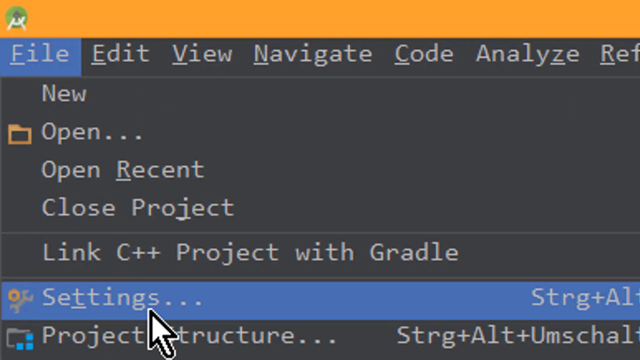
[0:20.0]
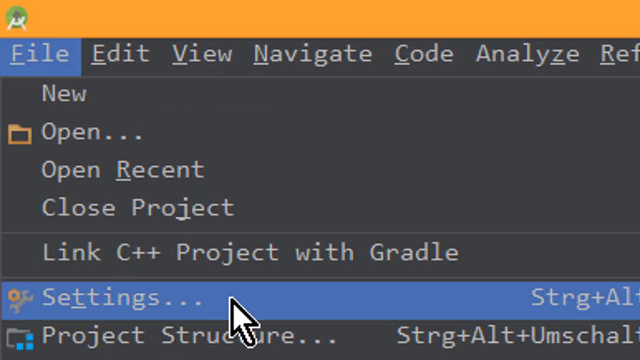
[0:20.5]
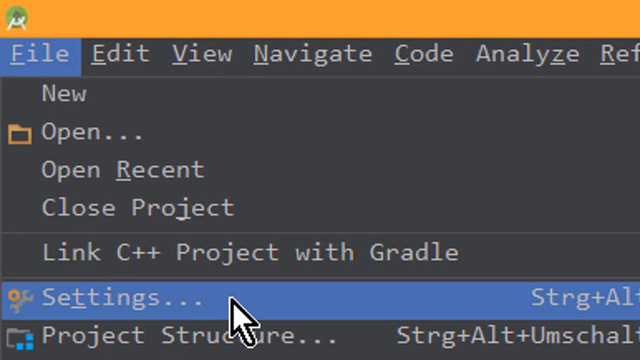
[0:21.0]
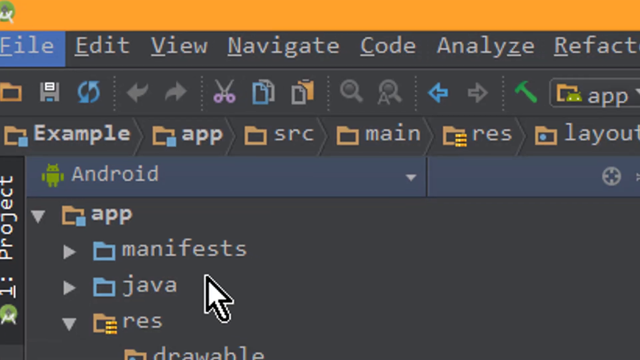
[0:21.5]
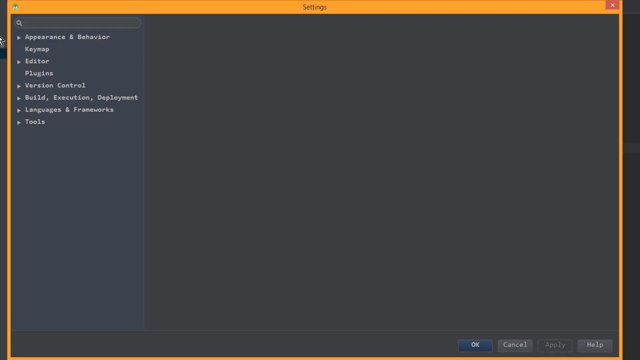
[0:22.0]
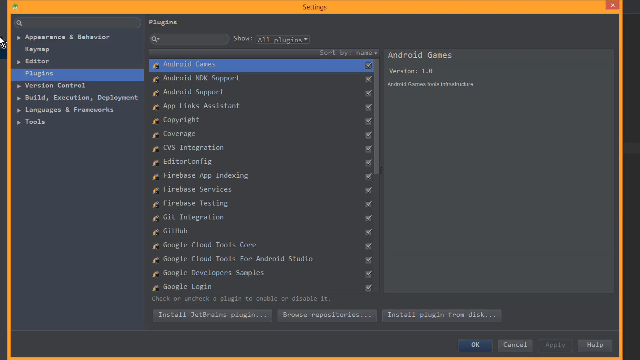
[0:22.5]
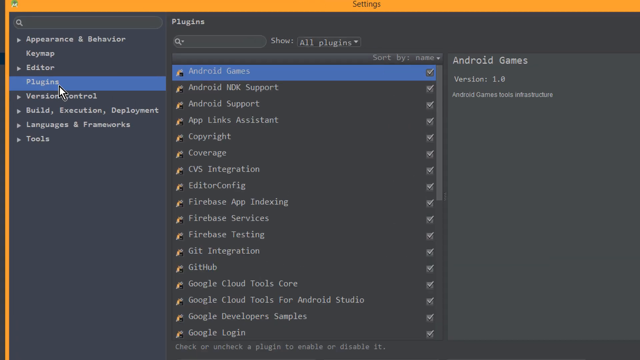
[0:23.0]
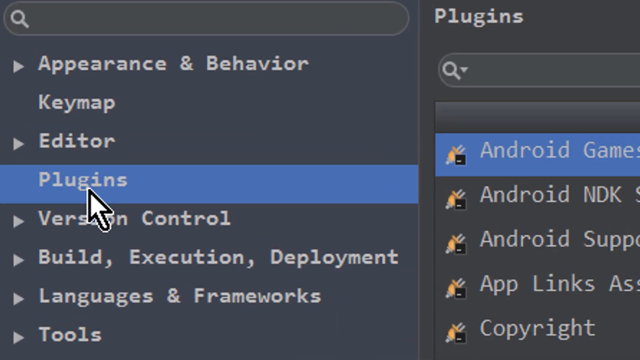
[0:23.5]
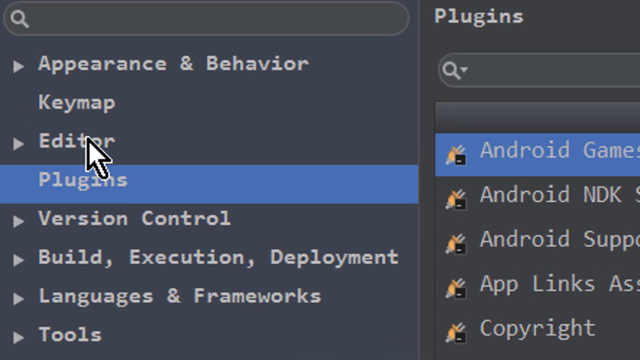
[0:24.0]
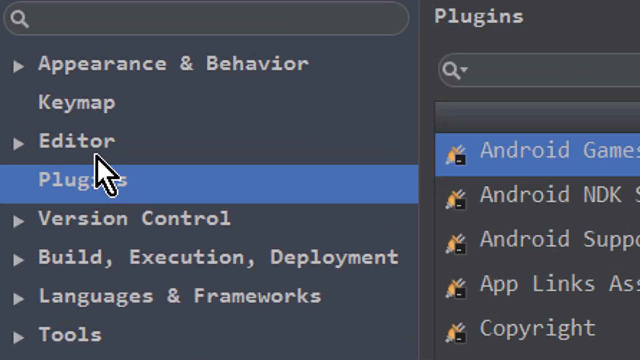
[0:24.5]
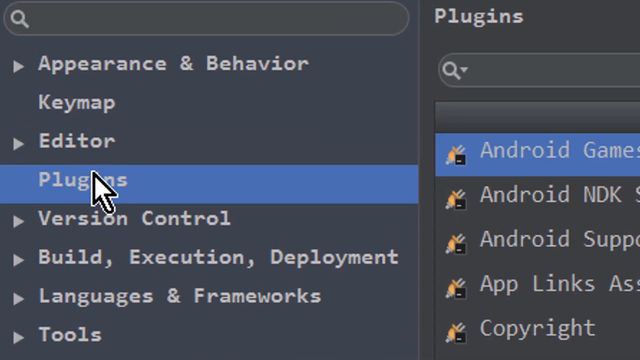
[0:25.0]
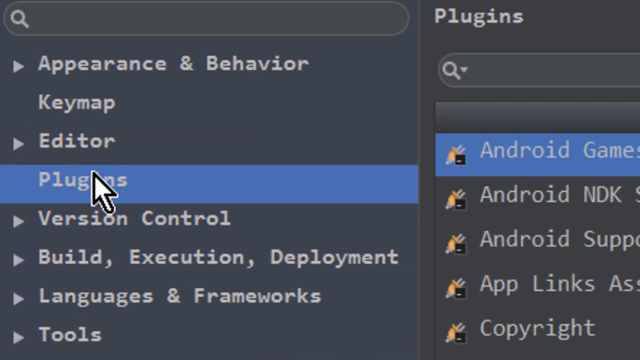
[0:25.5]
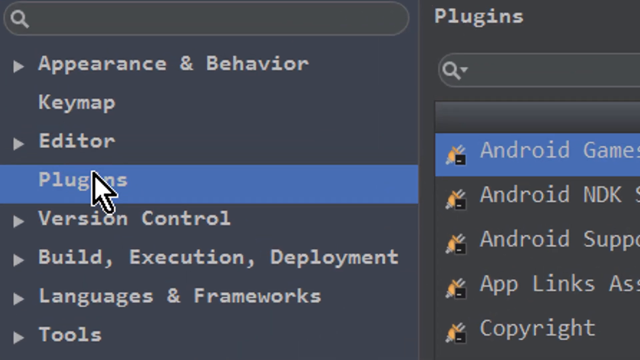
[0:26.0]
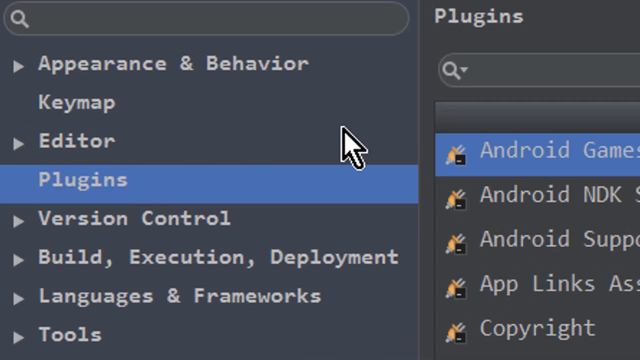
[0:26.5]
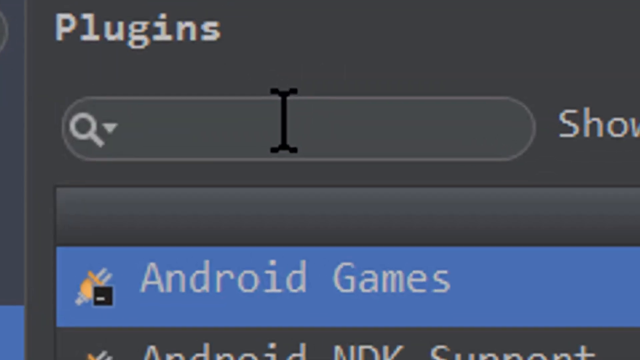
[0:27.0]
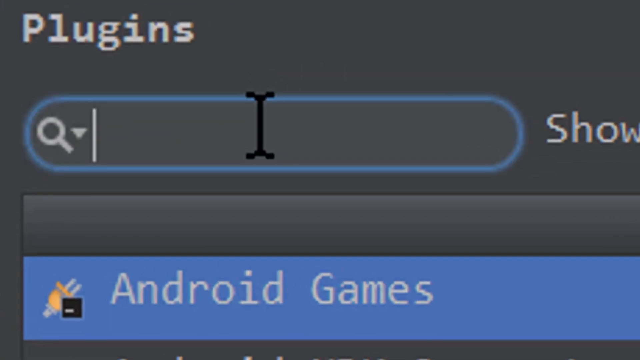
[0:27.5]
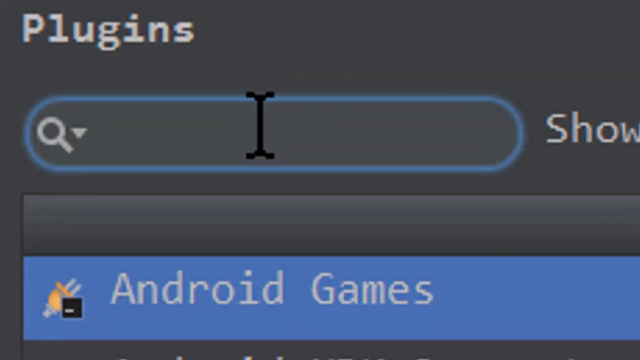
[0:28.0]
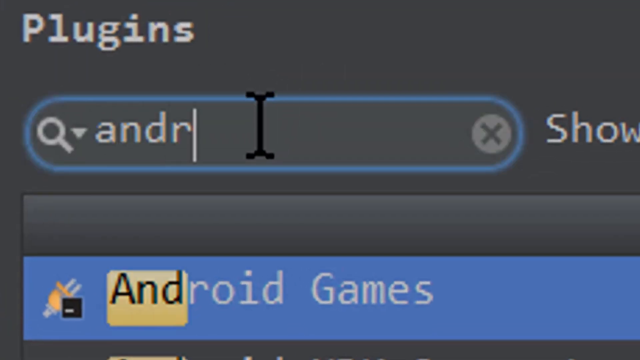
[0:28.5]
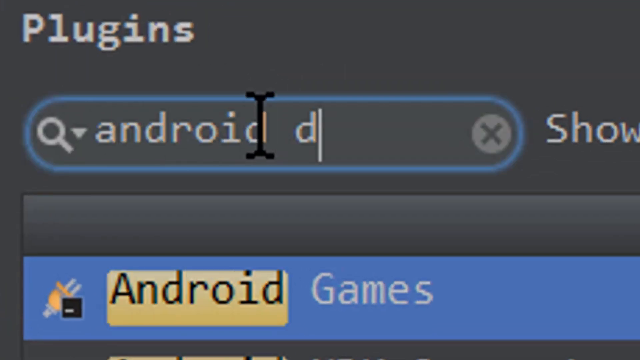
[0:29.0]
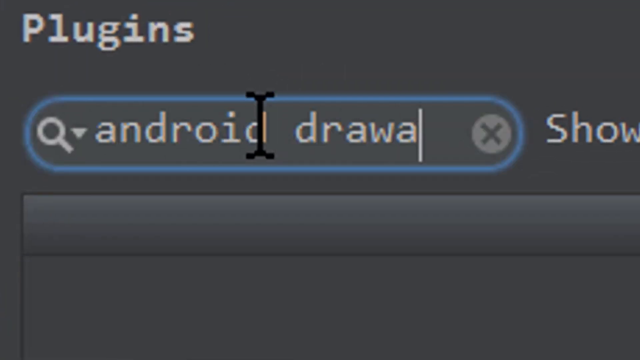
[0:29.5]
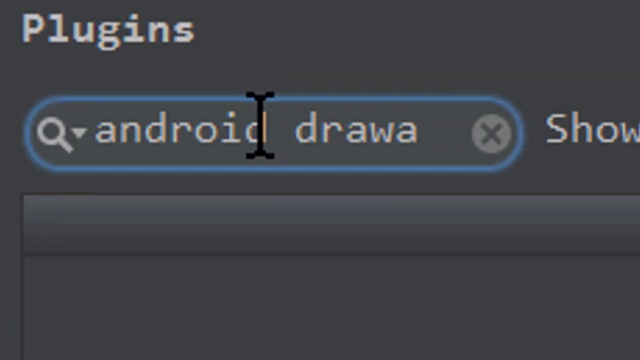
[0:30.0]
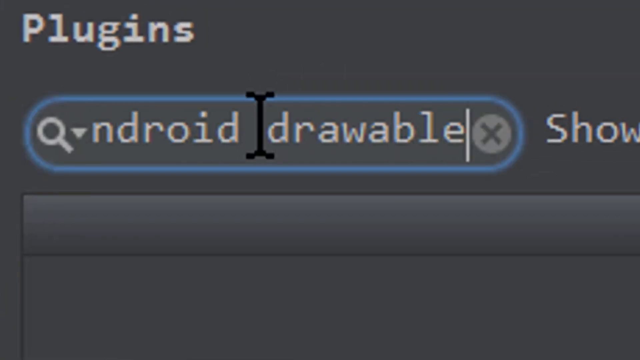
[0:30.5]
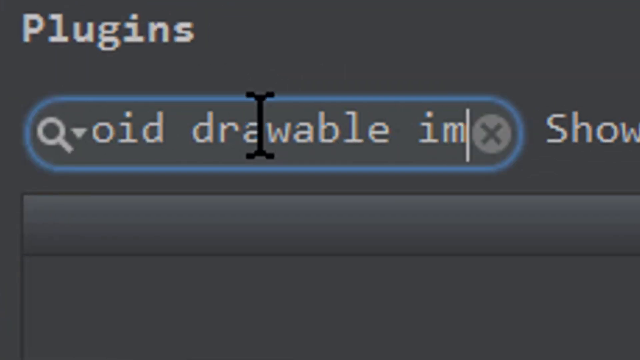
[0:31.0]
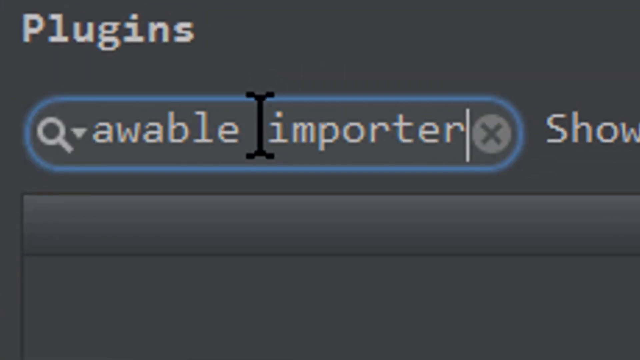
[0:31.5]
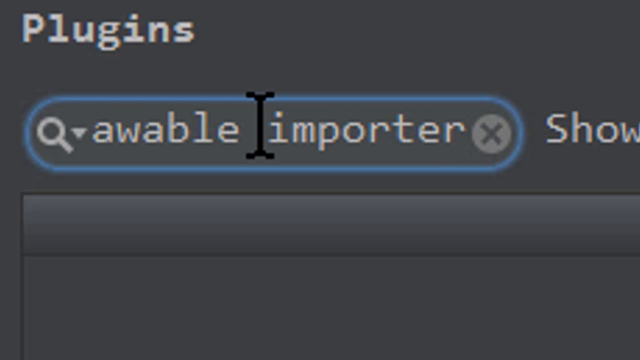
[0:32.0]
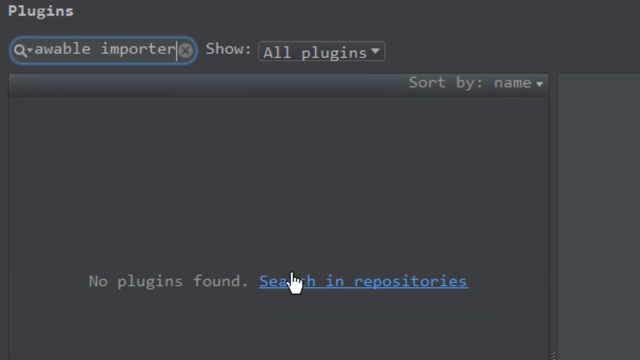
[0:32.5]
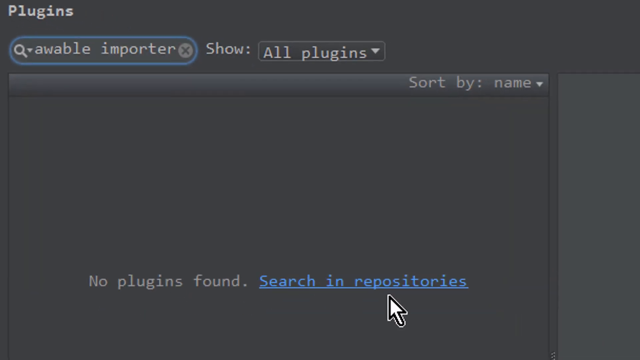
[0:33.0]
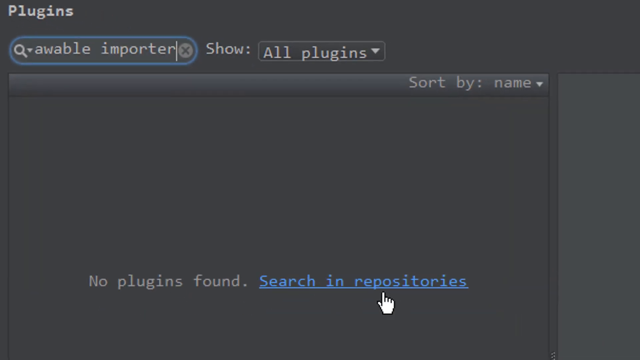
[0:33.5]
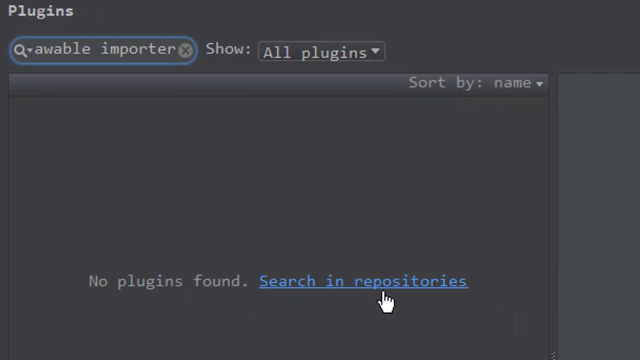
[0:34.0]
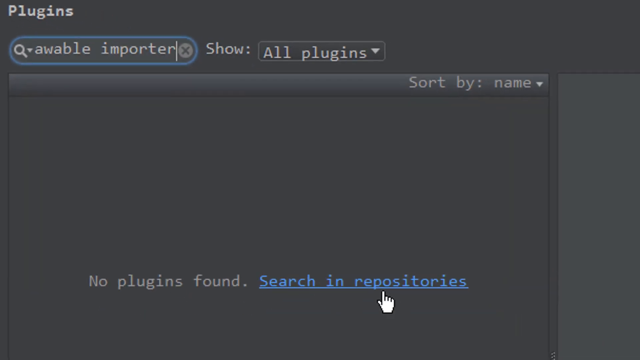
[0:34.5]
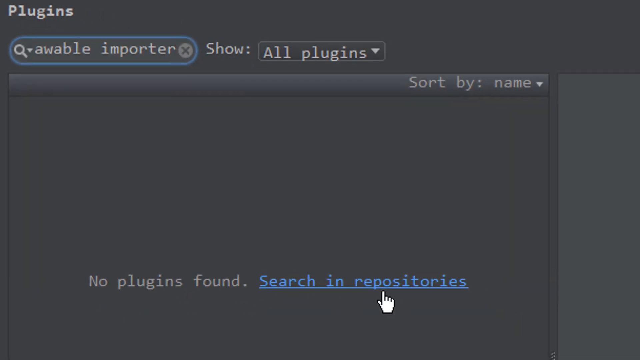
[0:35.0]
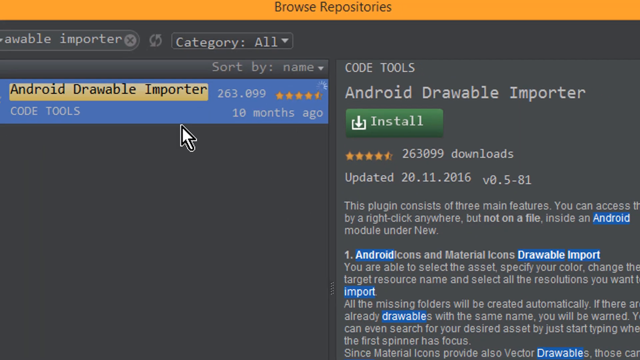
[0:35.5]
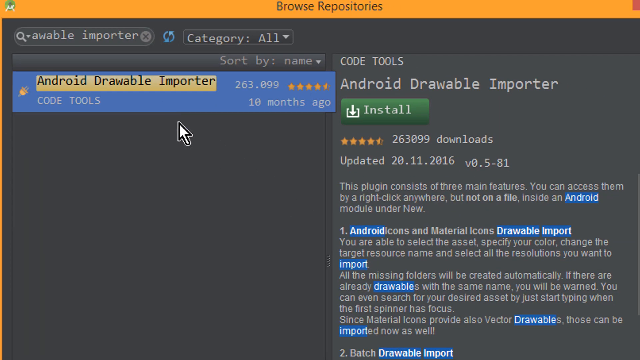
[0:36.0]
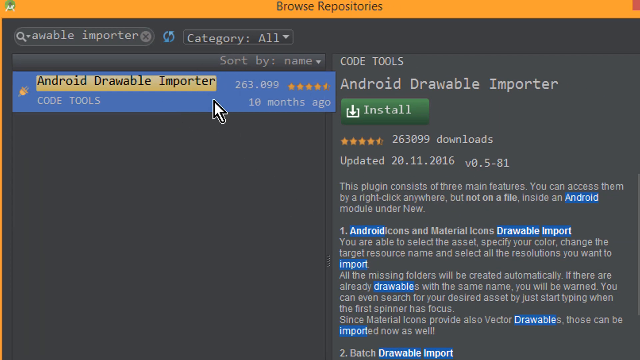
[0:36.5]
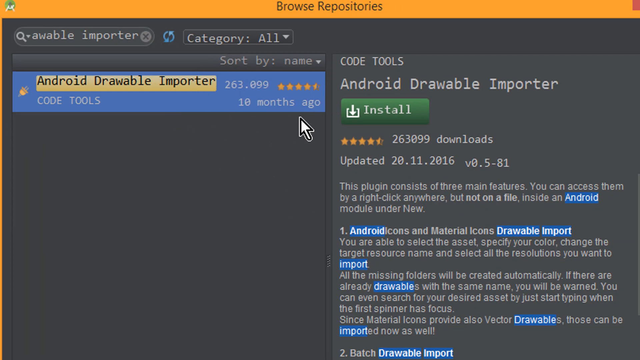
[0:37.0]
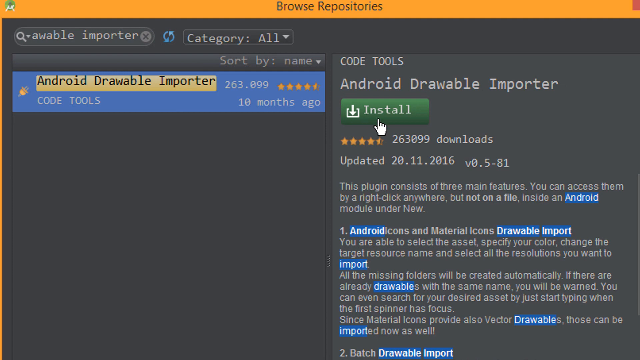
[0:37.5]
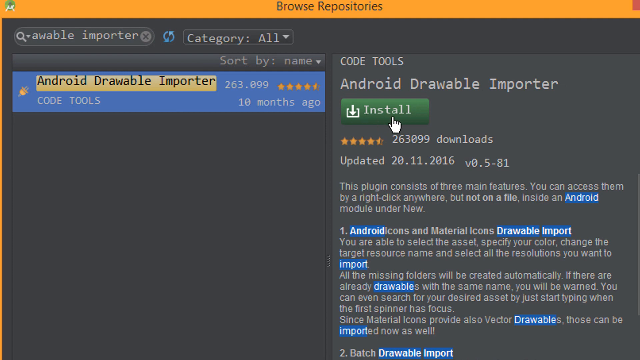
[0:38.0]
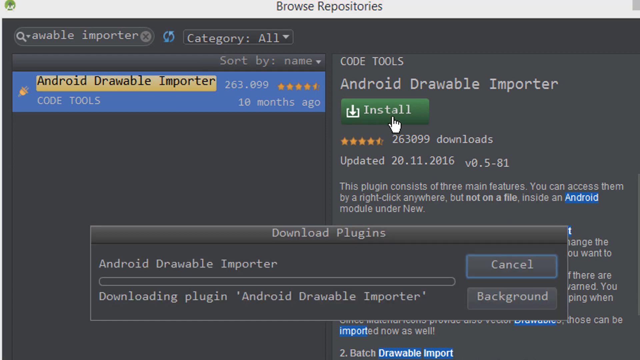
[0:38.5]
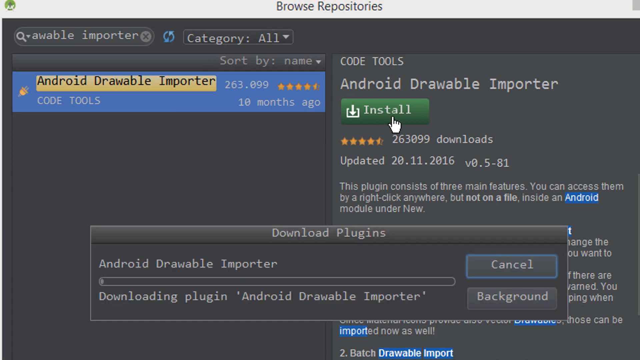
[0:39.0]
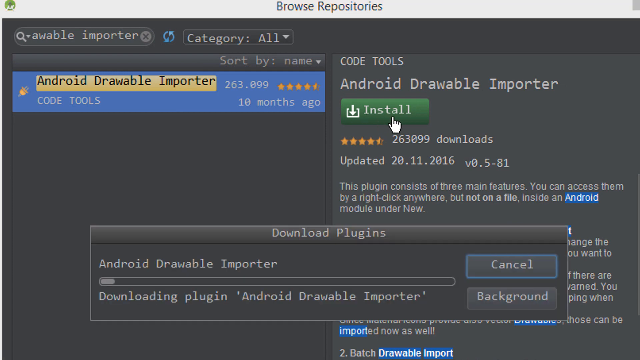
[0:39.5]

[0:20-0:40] The view is zoomed in on the top left corner of the screen with the code. "File", in white text at the top left, is selected and highlighted in light blue, and the mouse hovers over the settings button toward the bottom of the menu, which is also highlighted in blue. The user clicks on settings, and a new page appears that is black on the right side with many white text options and navy blue on the left side. The mouse hovers over the third option on the left side, "plugins", under "editor". The user clicks the search field under plugins and types "Android drawable importer". Underneath, in the black text box, it says "no plugins found", followed by a clickable link in blue underlined text reading "search in repositories". The view then transitions to an Android drawable importer application with a green install button on the right-hand side. The user clicks the install button and a black install box pops up at the bottom of the screen.